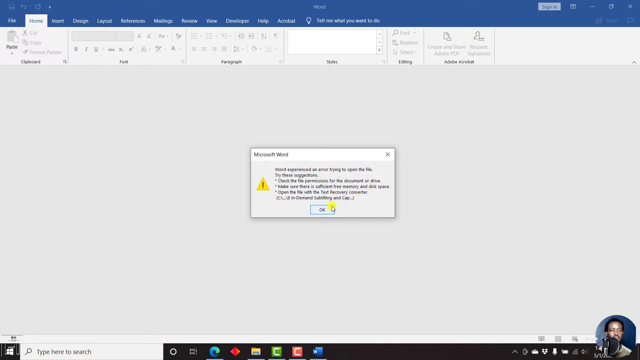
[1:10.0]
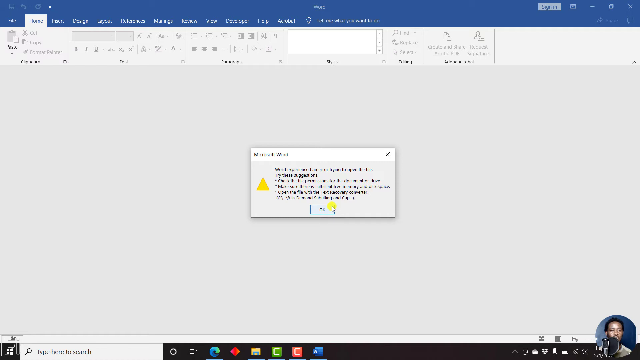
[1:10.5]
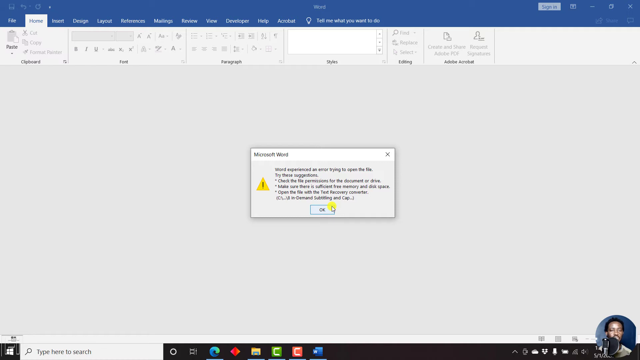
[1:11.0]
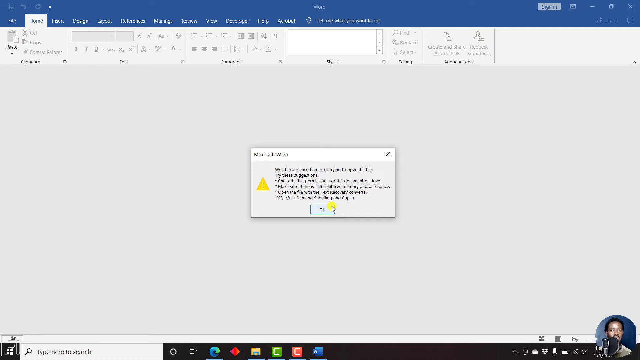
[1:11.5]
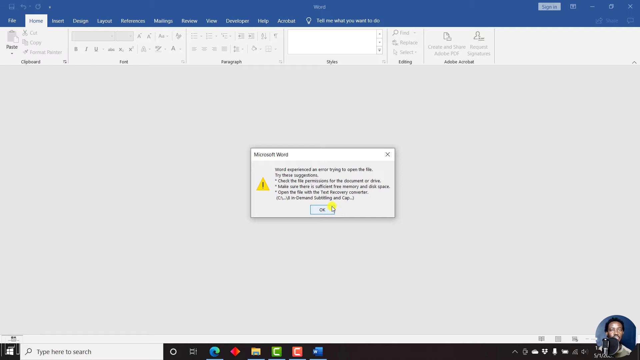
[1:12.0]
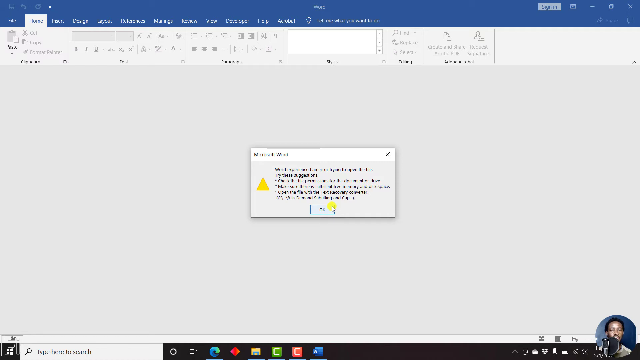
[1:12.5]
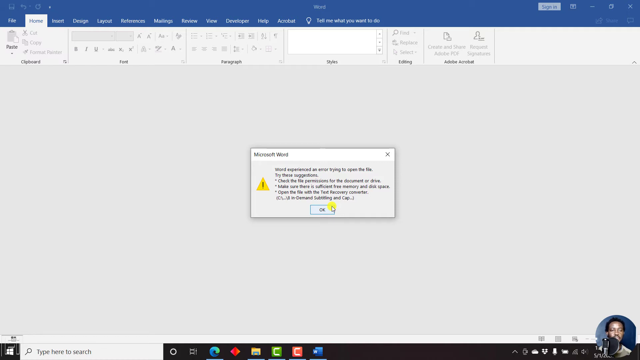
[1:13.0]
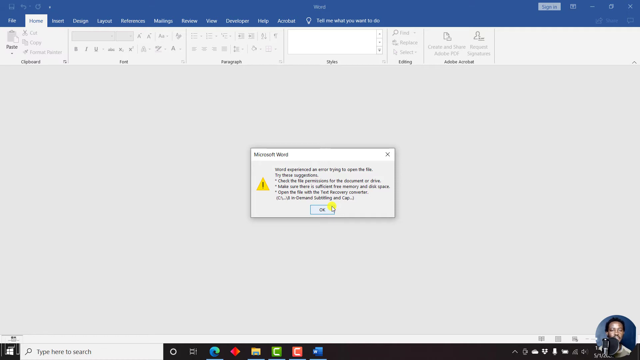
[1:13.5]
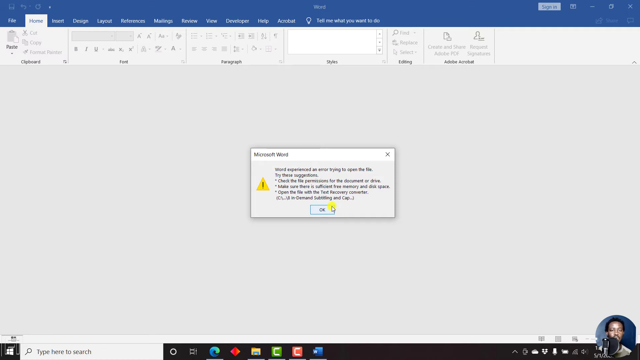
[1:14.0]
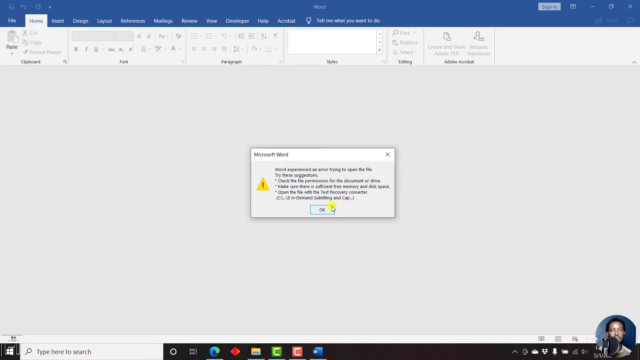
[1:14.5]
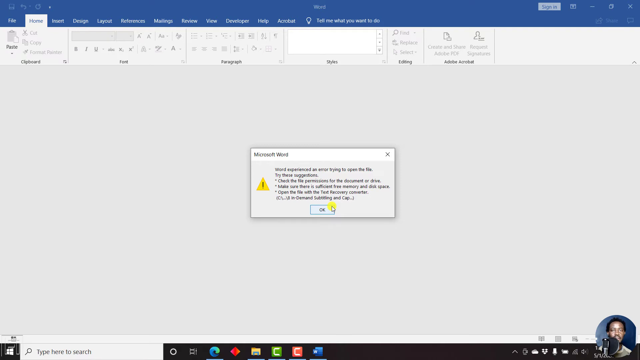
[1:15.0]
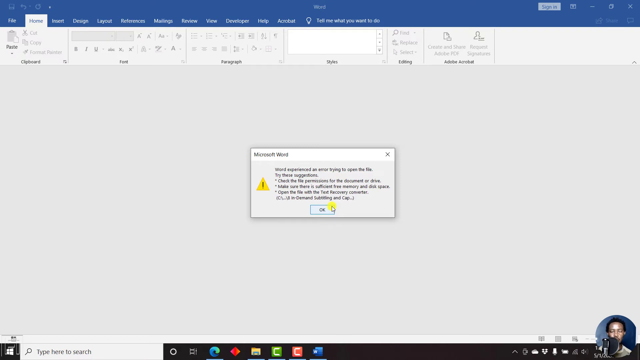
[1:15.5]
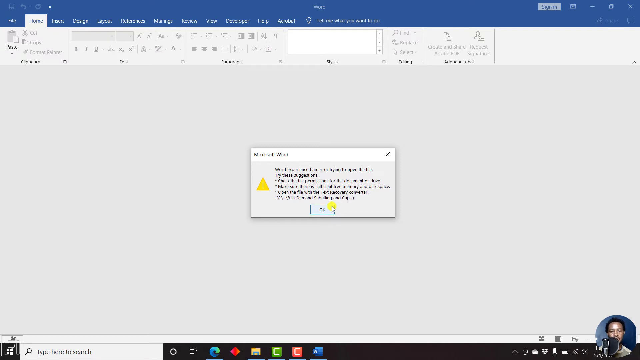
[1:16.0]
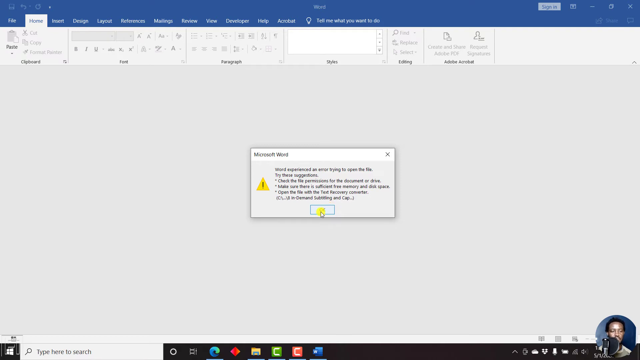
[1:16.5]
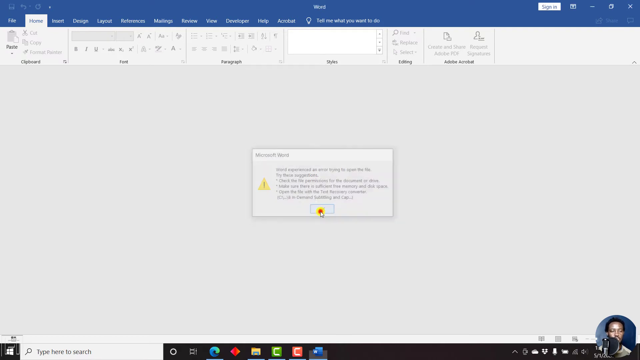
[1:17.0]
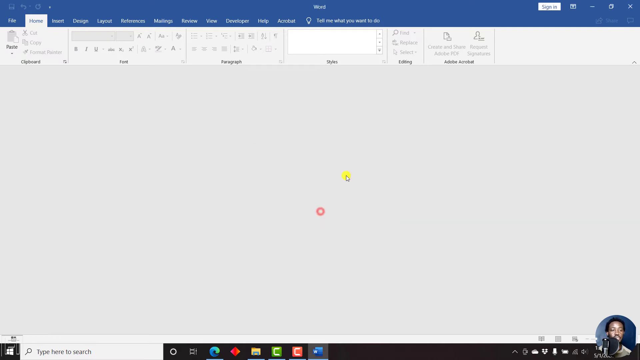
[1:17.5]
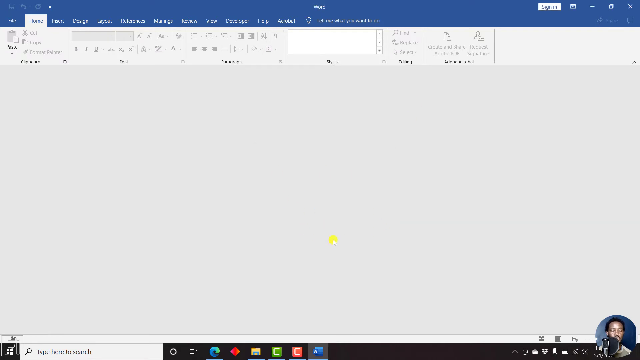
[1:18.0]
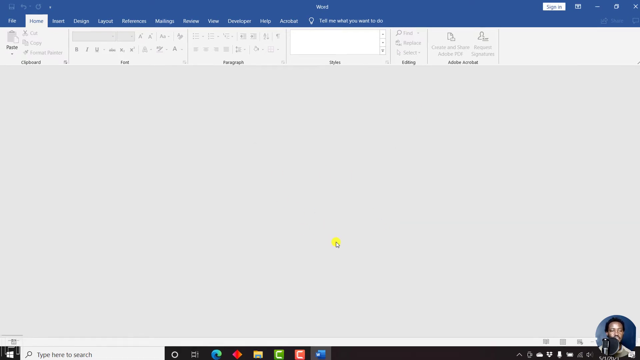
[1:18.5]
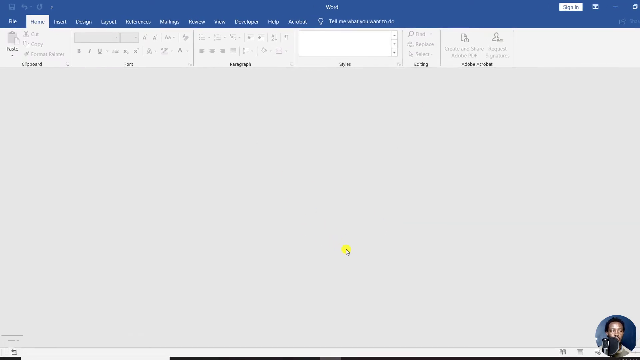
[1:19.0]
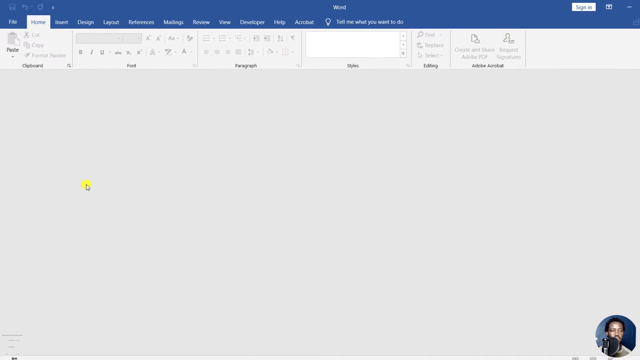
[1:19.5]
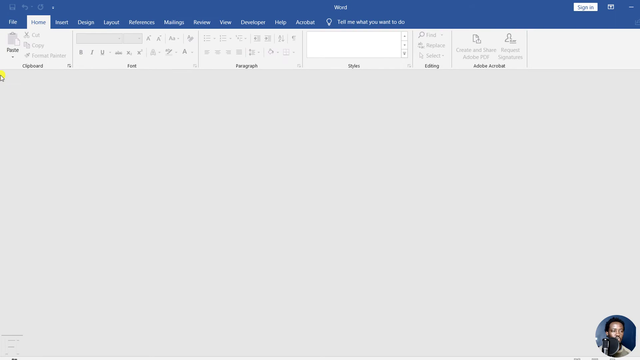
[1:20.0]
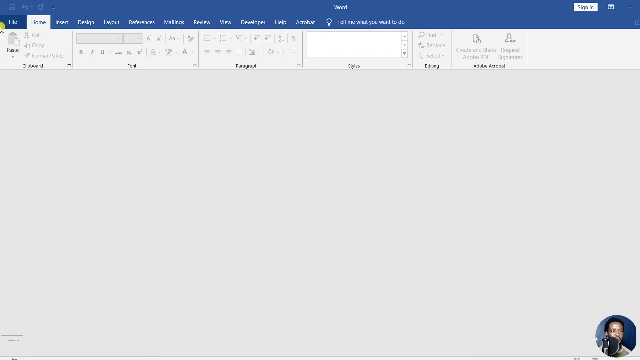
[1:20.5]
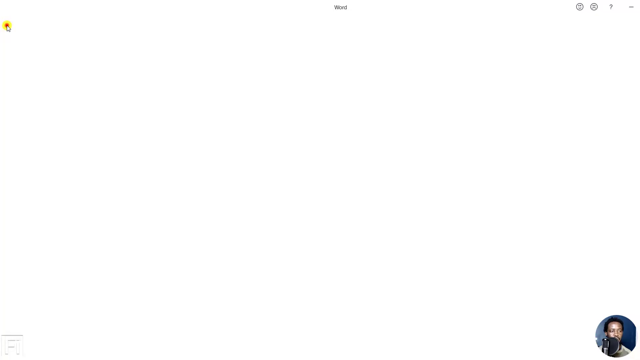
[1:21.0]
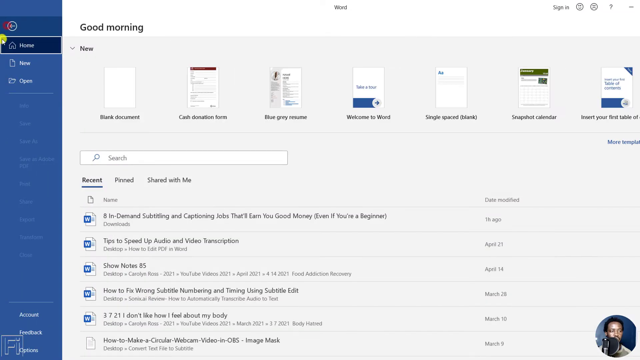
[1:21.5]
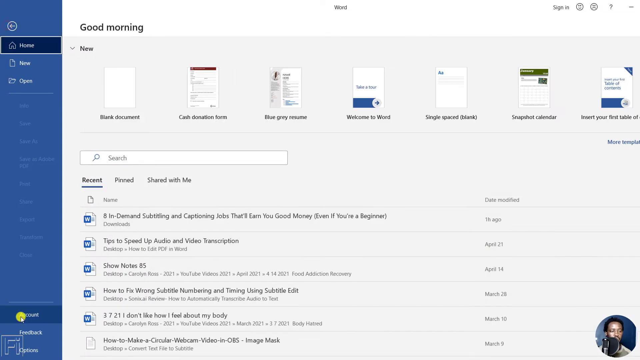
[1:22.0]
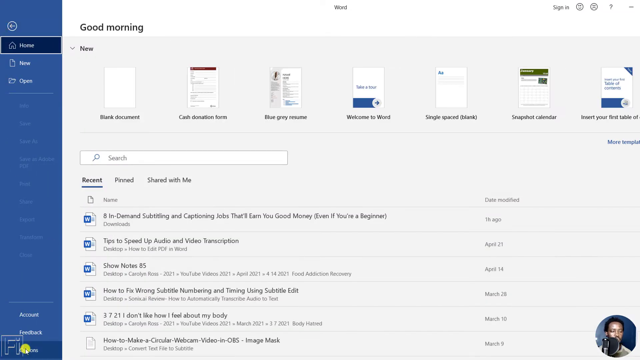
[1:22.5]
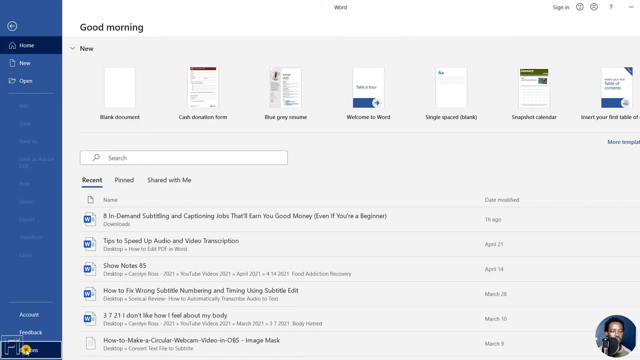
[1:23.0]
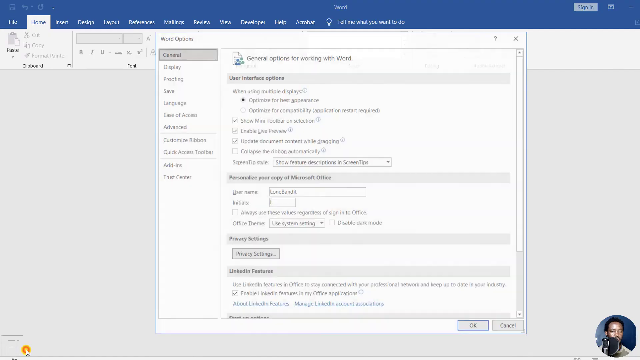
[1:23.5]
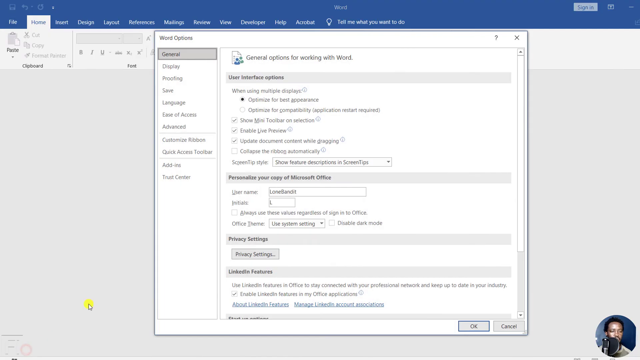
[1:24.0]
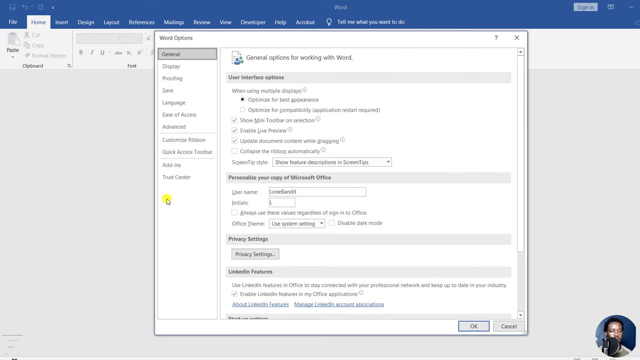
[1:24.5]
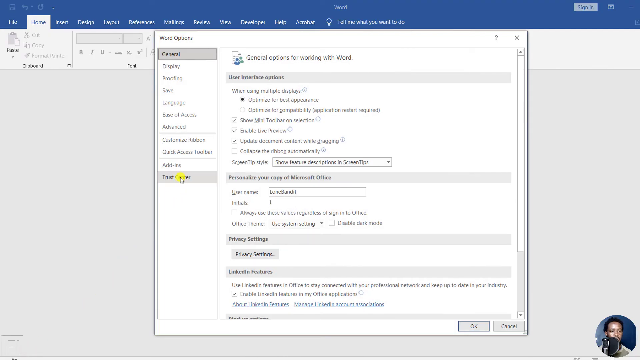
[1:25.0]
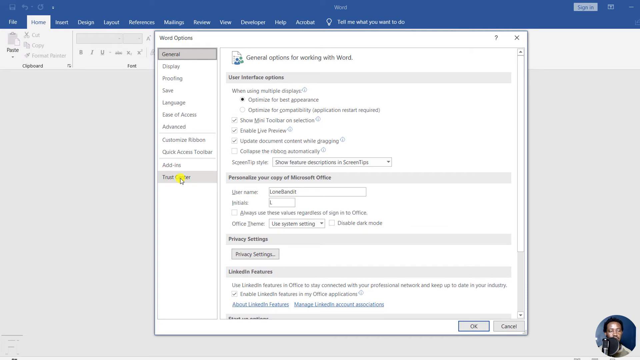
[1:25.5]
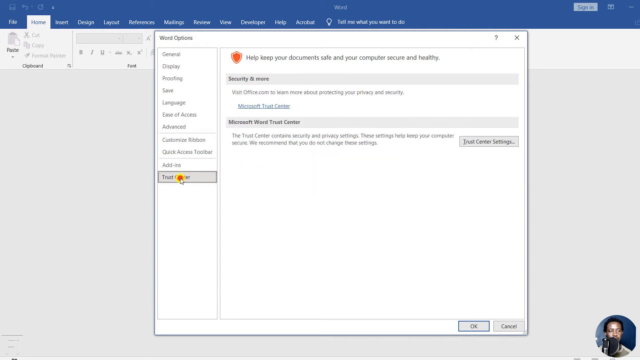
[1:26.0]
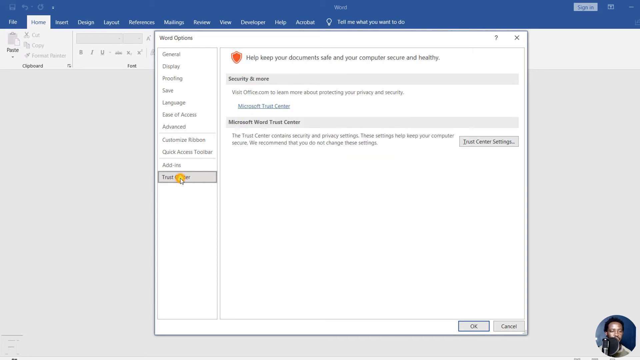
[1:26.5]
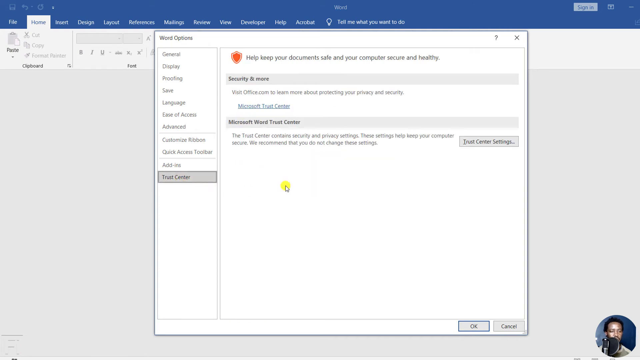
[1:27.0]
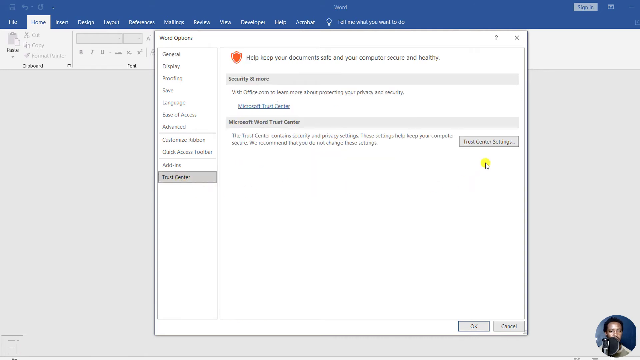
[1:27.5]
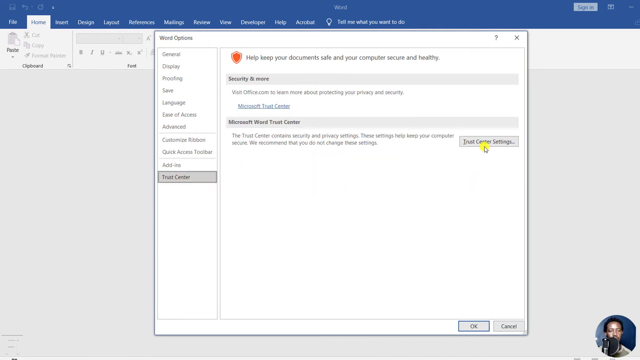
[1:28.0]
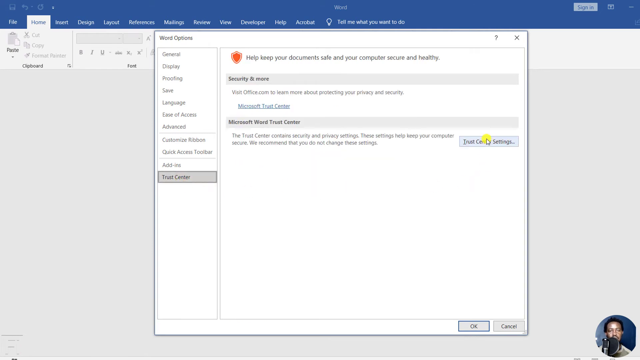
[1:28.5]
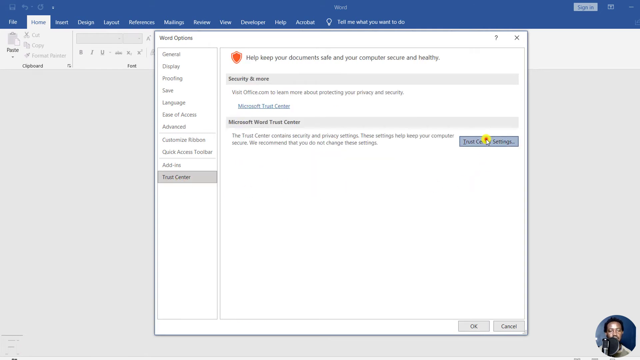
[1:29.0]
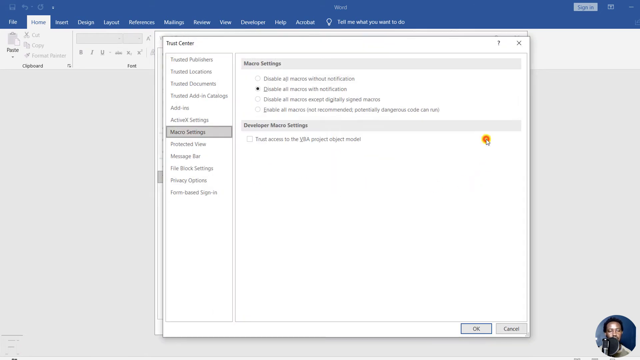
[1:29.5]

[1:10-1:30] The Microsoft Word program is open, with the error message in the middle stating that Word experienced an error trying to open the file, followed by suggestions in text. The mouse cursor is slightly over the OK button, which has a blue outline. The cursor then moves directly over the OK button and clicks it, and a little red circle animation appears with the click. The error message disappears, leaving an empty Microsoft Word program with no file loaded. The cursor moves to the File button and clicks it, opening a new page with various options. At the top of the page it says "Good Morning". Below that is a row of document options: "Blank Document", "Cash Donation Form", "Blue Gray", "Resume", "Welcome to Word", "Single Spaced Blank", "Snapshot Calendar", and "Insert Your First Table of Contents". The cursor moves around a bit before clicking a button, and a new page appears.